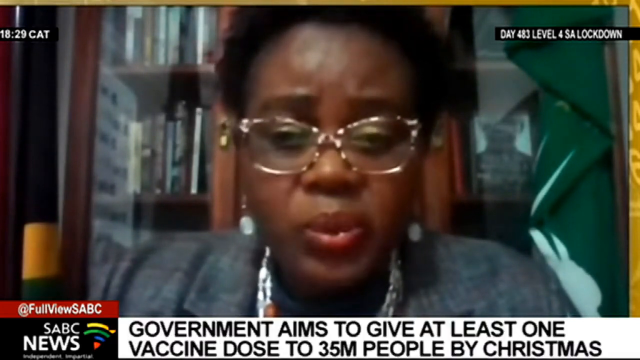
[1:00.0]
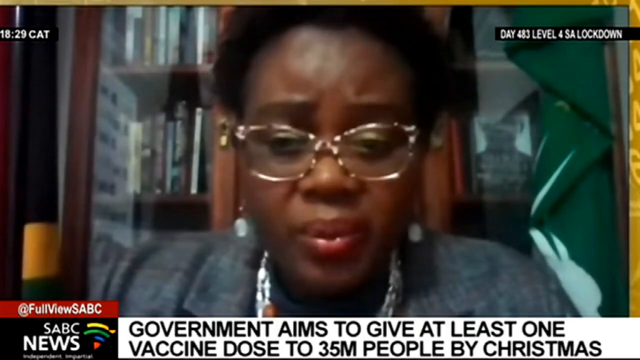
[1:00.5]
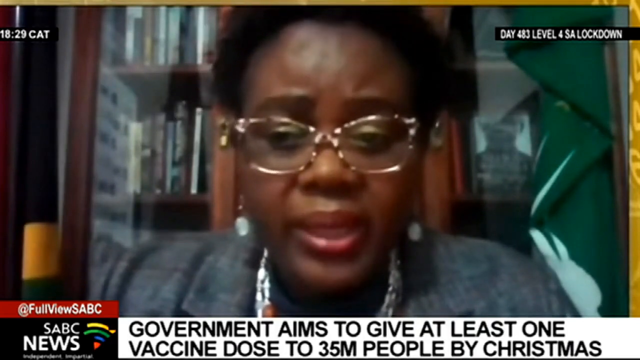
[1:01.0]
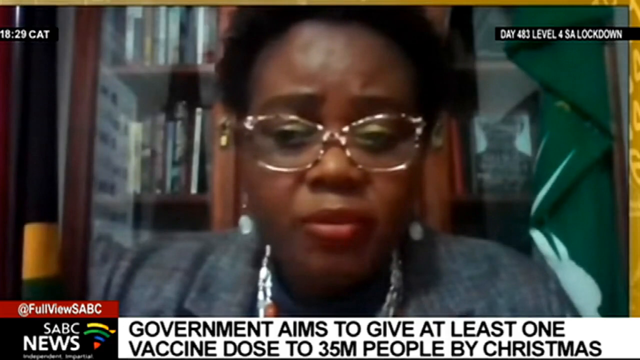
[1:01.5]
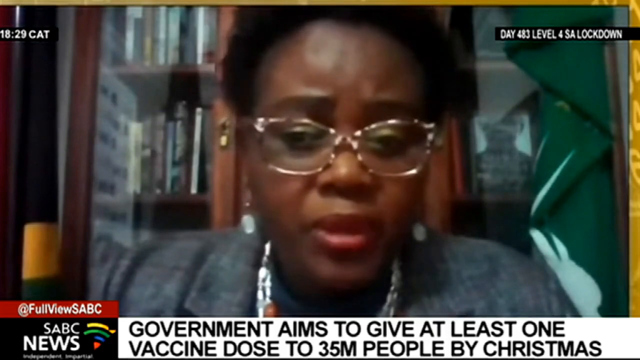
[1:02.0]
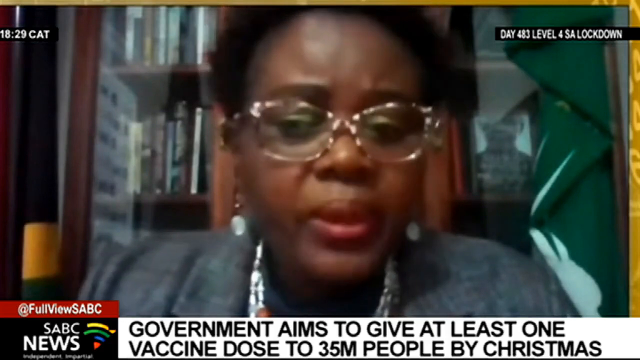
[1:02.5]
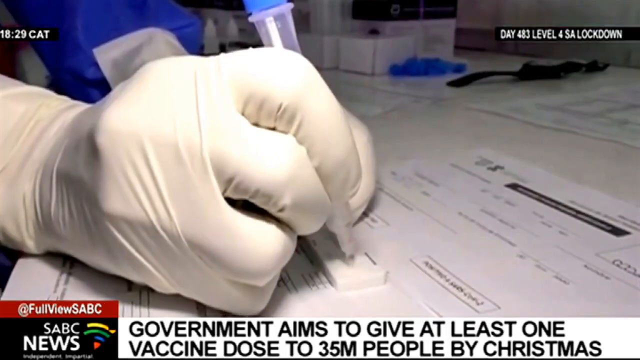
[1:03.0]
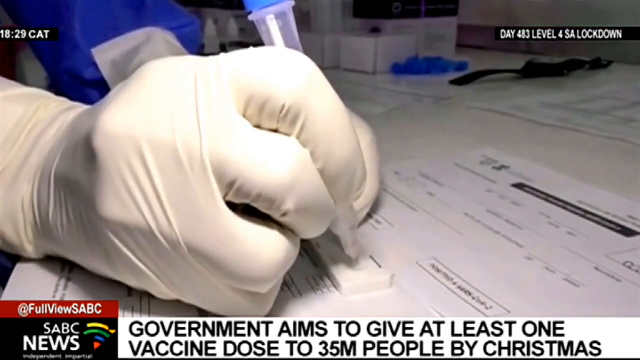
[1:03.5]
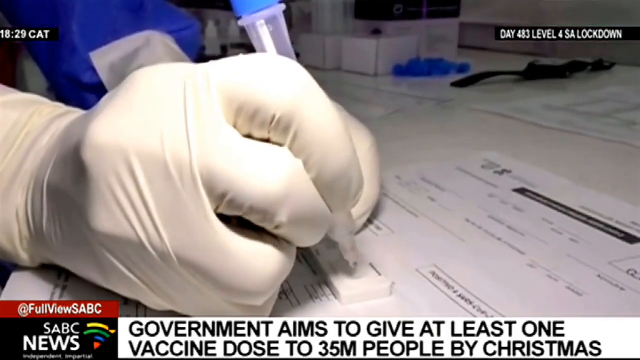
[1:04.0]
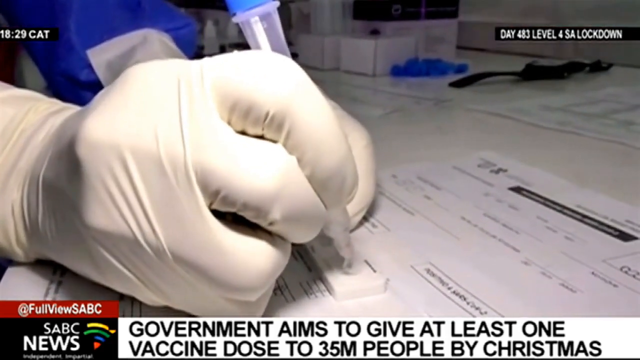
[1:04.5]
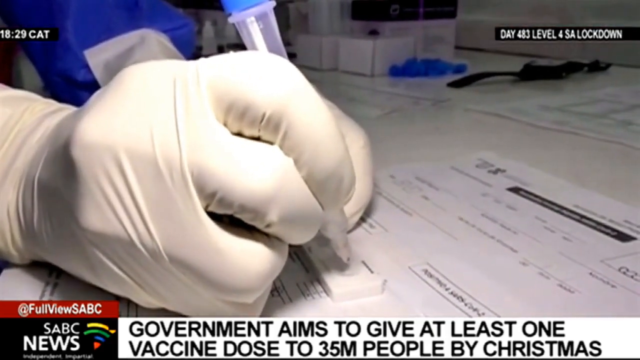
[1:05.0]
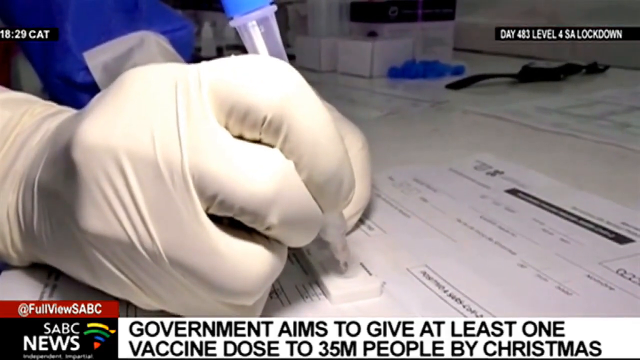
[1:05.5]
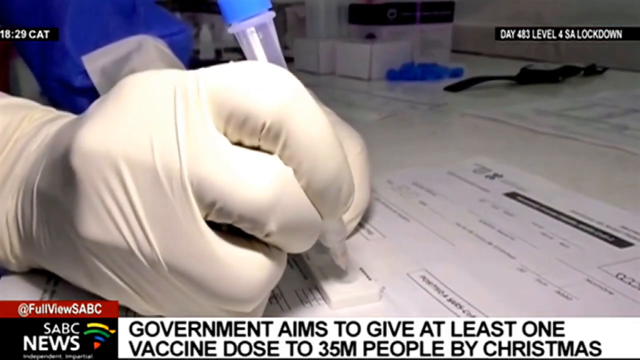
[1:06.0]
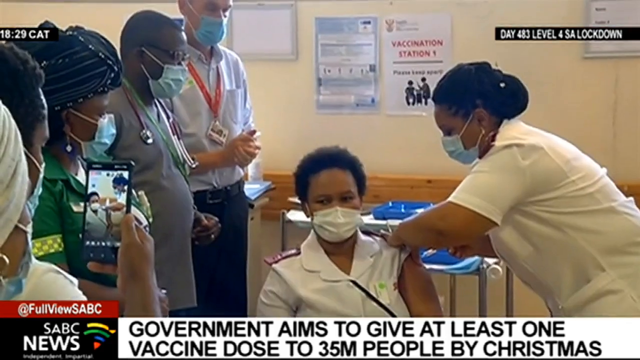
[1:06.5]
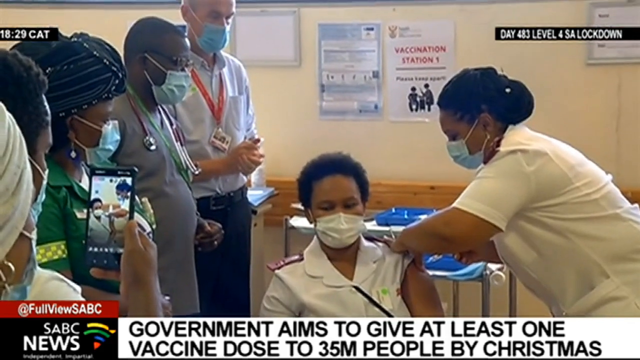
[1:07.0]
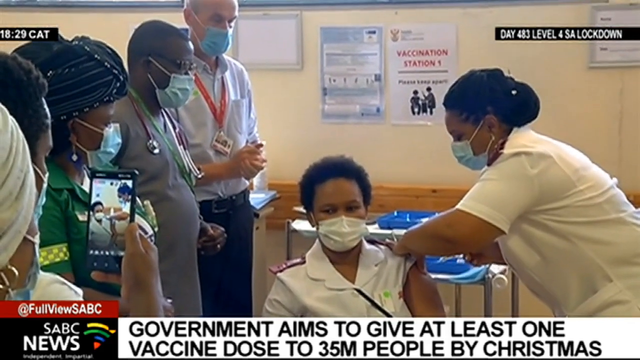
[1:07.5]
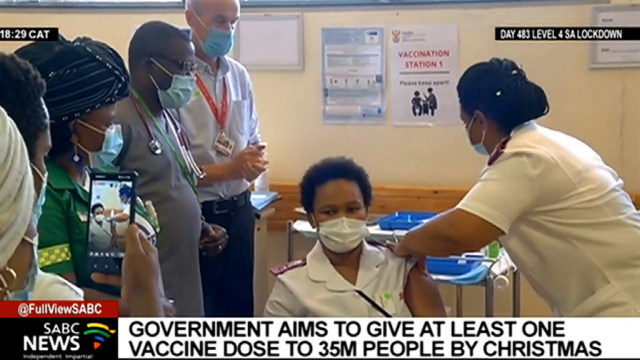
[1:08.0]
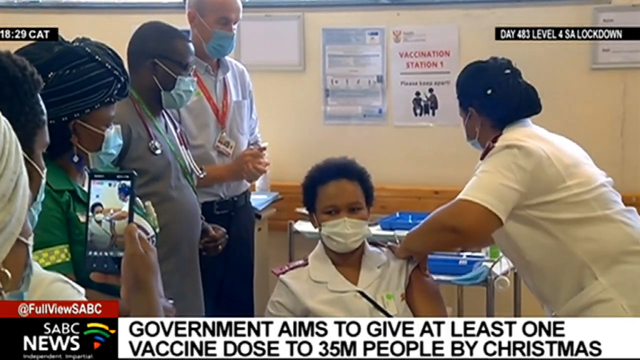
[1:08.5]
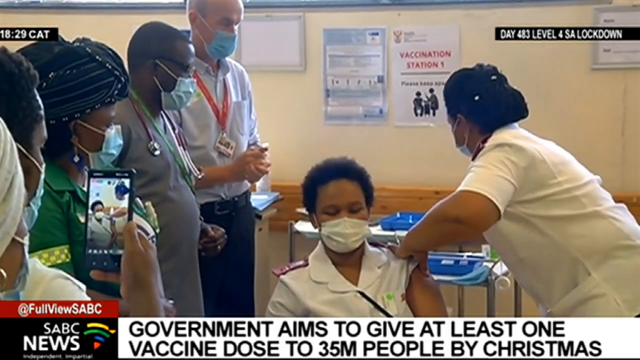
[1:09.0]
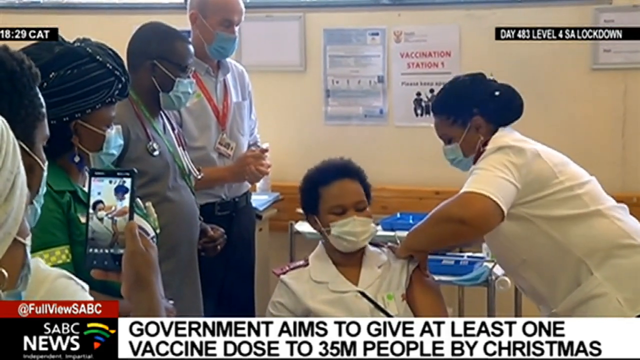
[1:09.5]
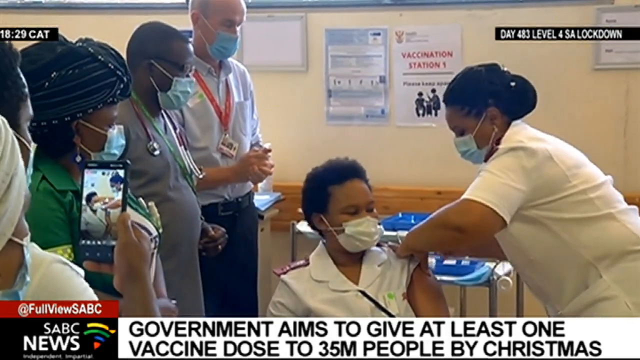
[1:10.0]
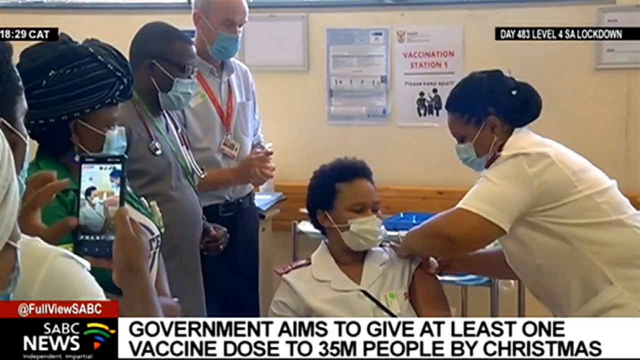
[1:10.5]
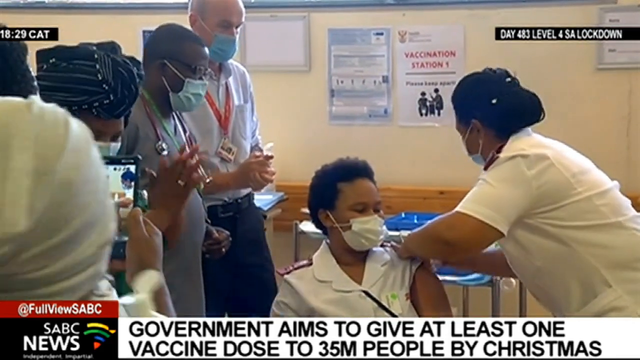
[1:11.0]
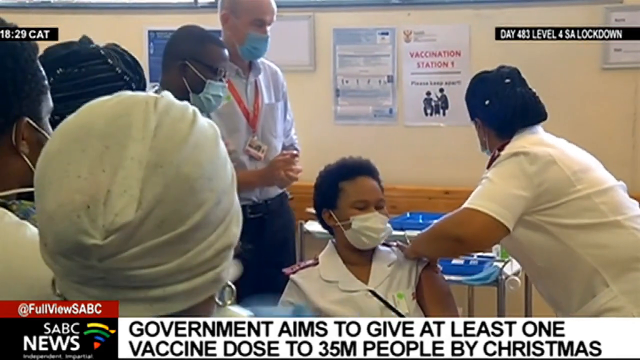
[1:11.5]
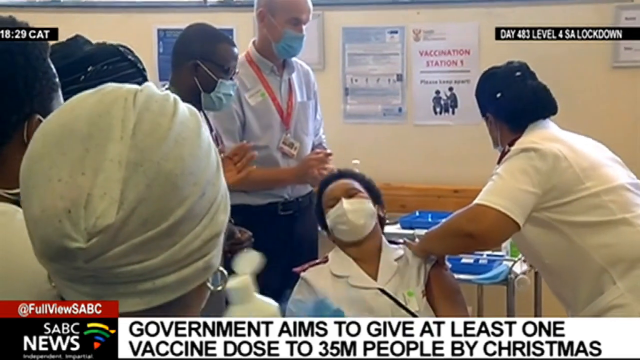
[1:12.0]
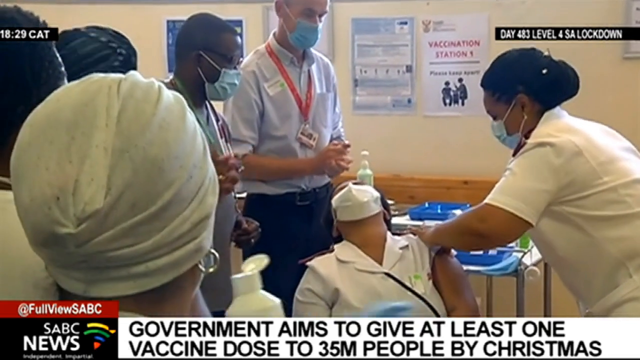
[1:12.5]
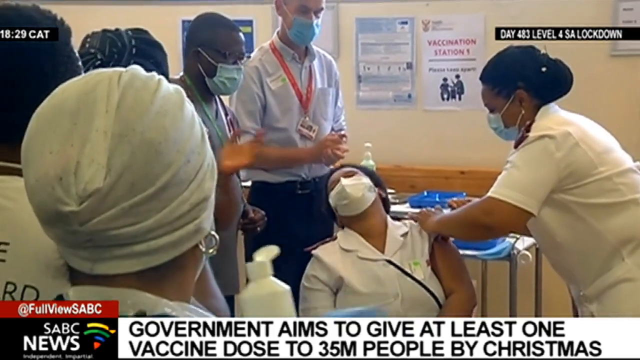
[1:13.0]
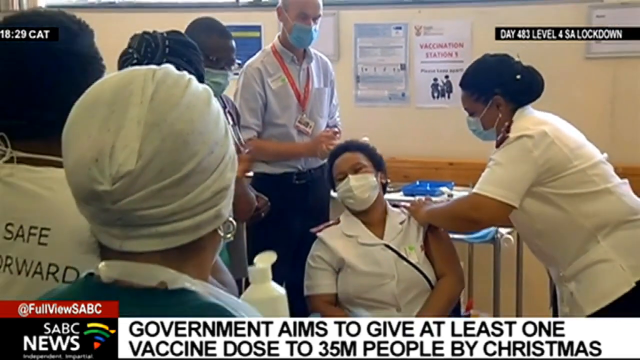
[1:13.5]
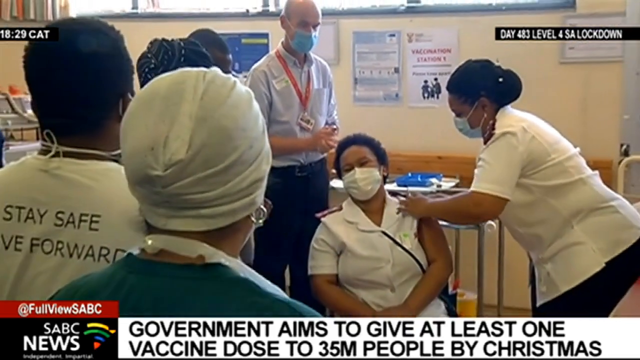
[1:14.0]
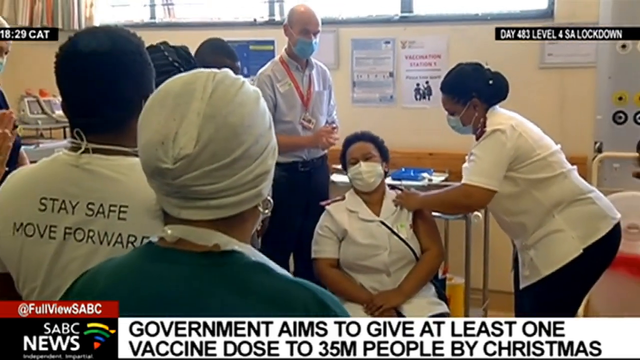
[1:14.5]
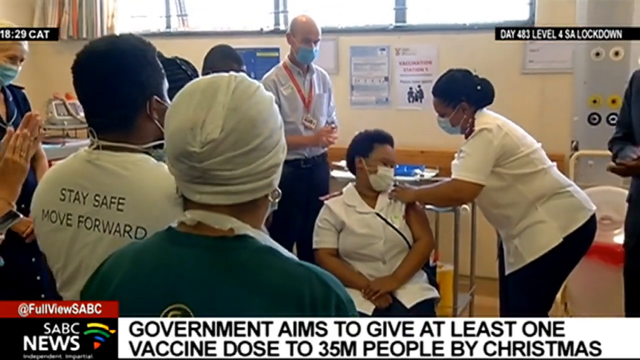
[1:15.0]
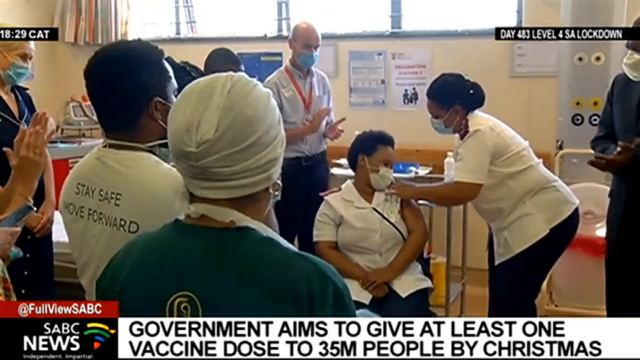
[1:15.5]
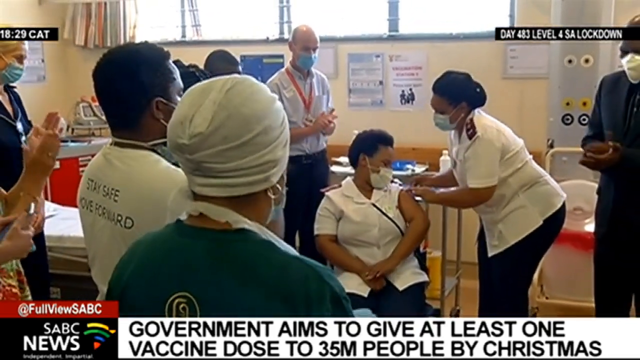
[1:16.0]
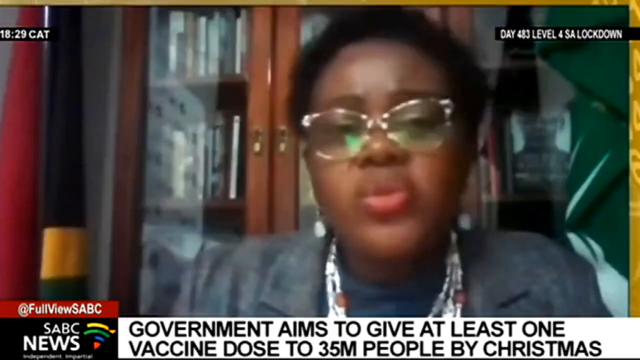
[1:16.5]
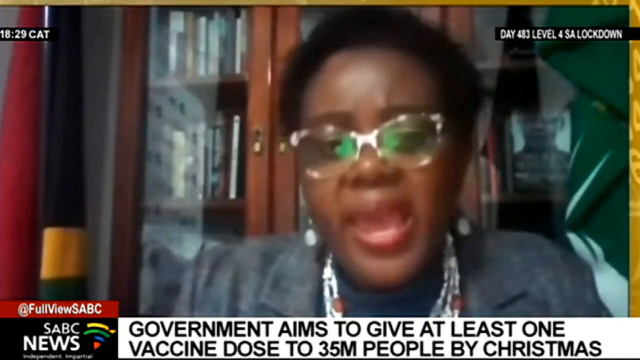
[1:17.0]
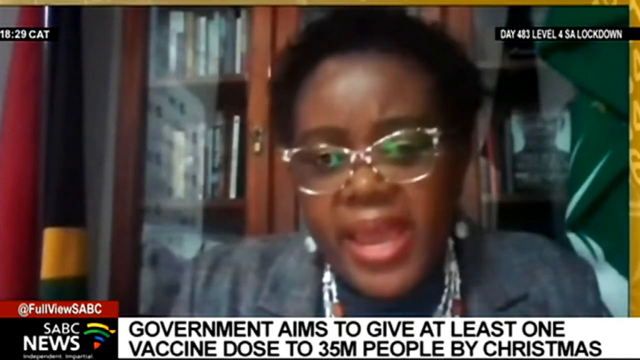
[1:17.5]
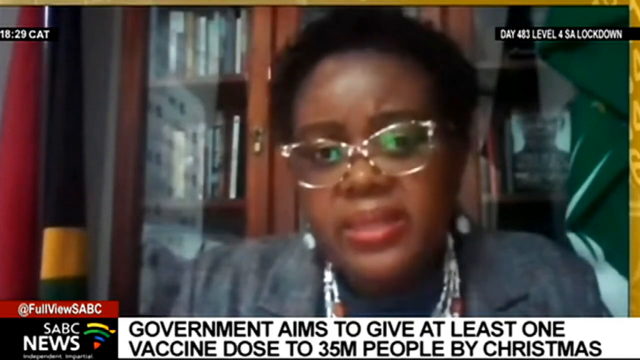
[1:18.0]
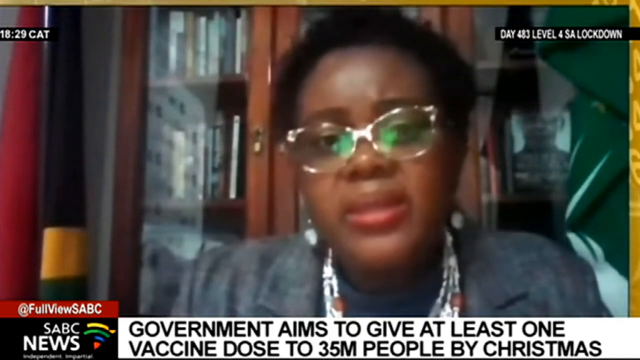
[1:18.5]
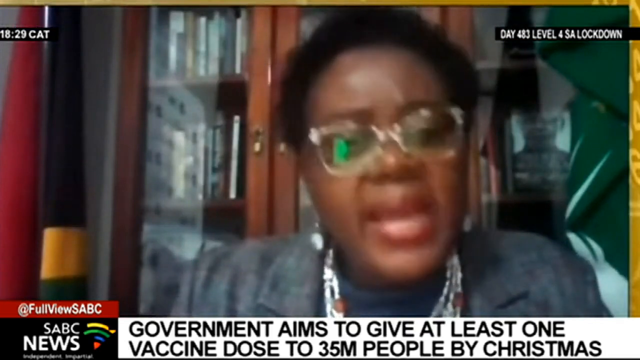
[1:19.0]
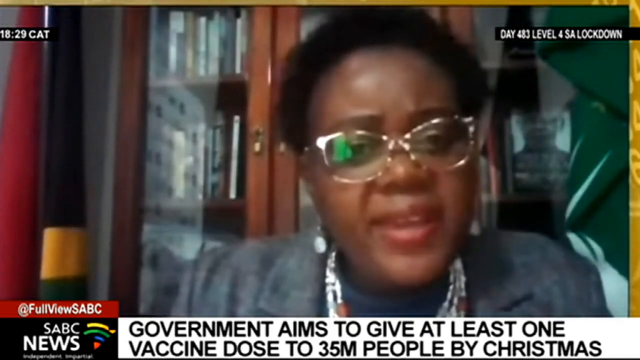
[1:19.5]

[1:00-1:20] The woman continues speaking on the live newscast. The footage then shows what seems to be a COVID test, with a gloved health professional using a dropper to drop solution into the test. Next, a person gets vaccinated while people around them watch, one of them recording on a phone; after the vaccination, the people around them clap. The woman then appears speaking again. She wears a gray top, lots of jewelry, and embellished glasses that look to be silver and gold.